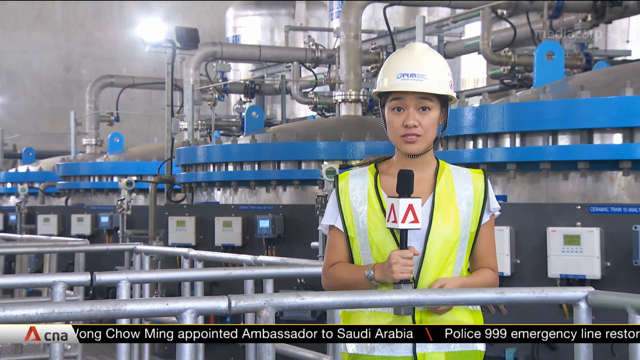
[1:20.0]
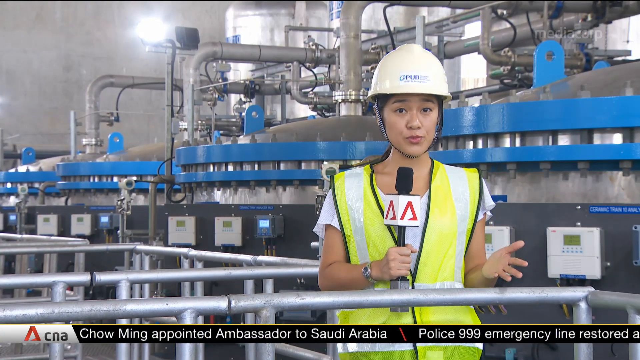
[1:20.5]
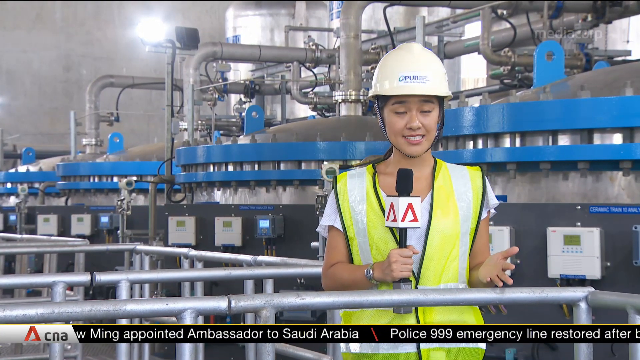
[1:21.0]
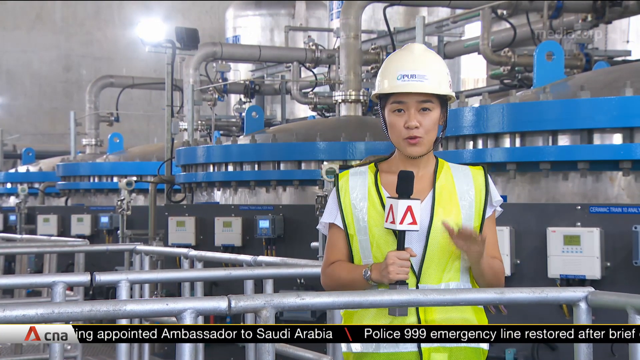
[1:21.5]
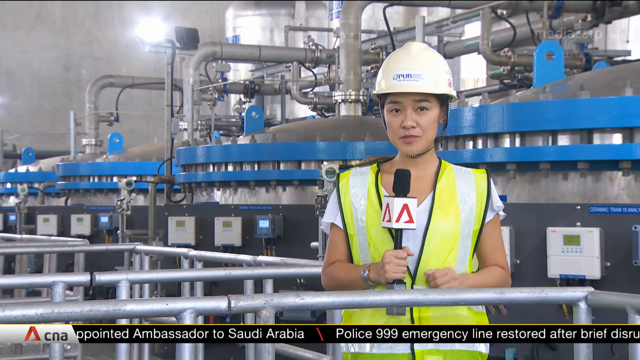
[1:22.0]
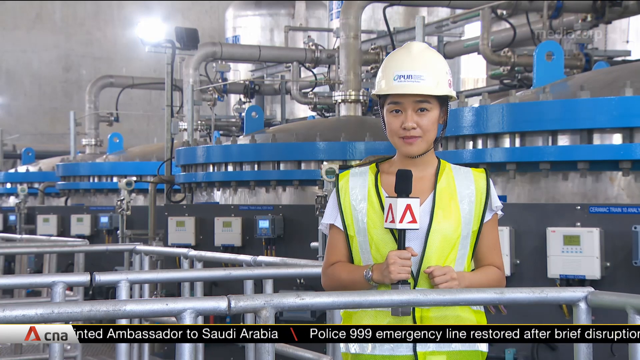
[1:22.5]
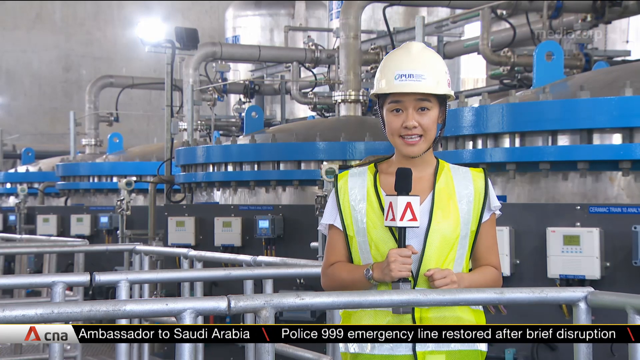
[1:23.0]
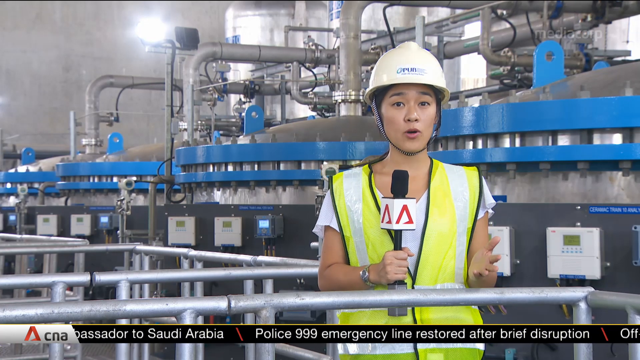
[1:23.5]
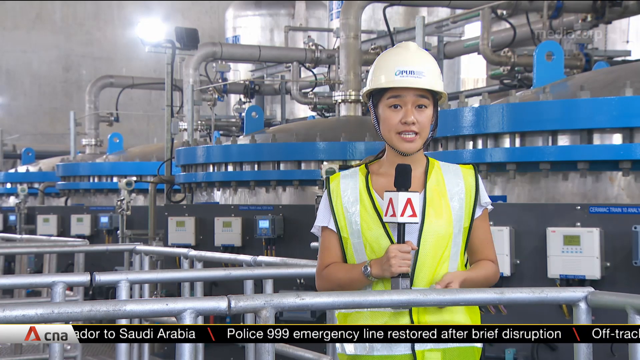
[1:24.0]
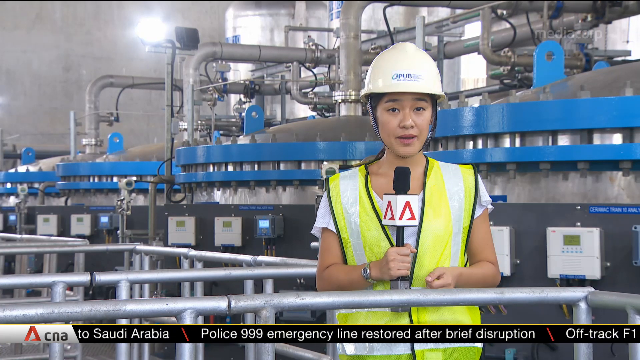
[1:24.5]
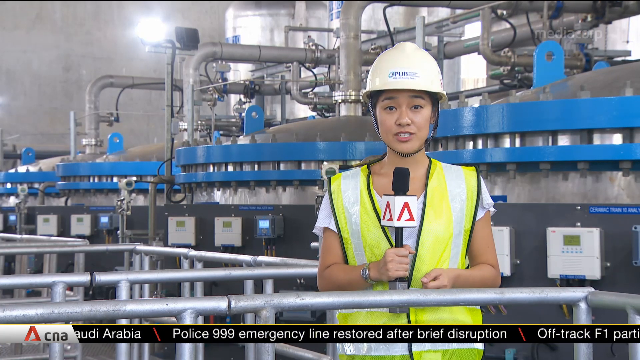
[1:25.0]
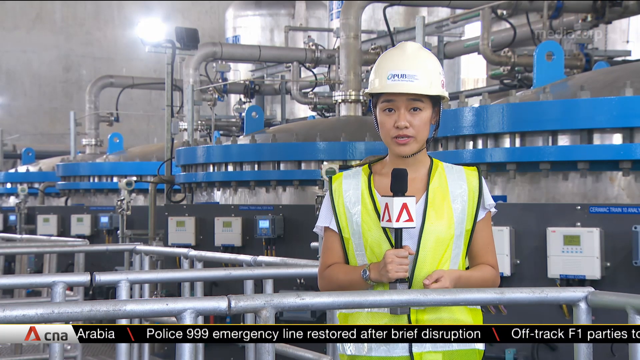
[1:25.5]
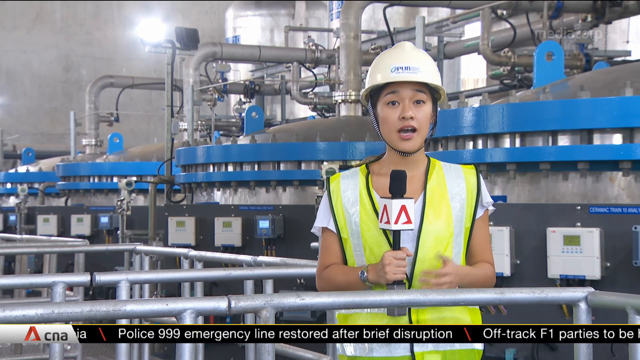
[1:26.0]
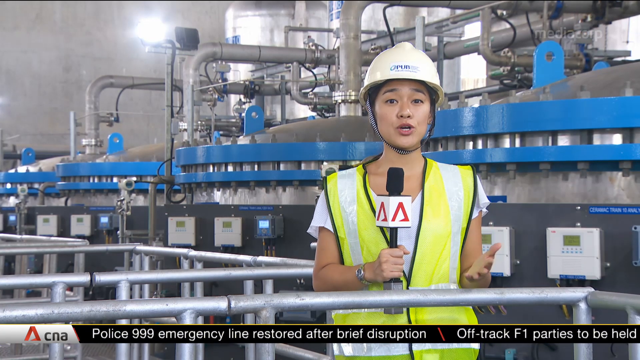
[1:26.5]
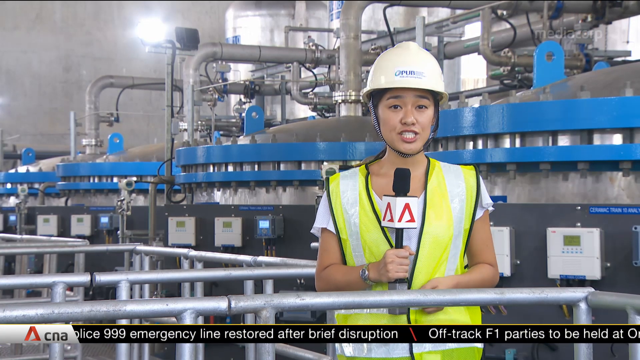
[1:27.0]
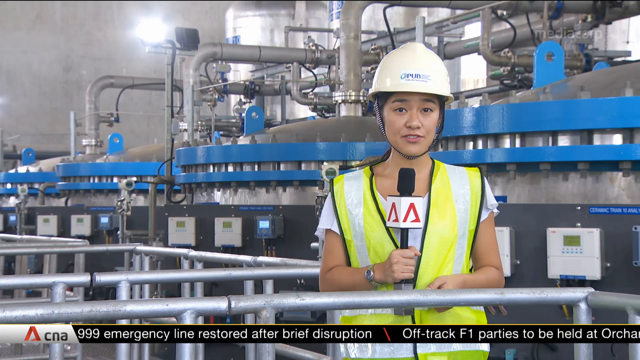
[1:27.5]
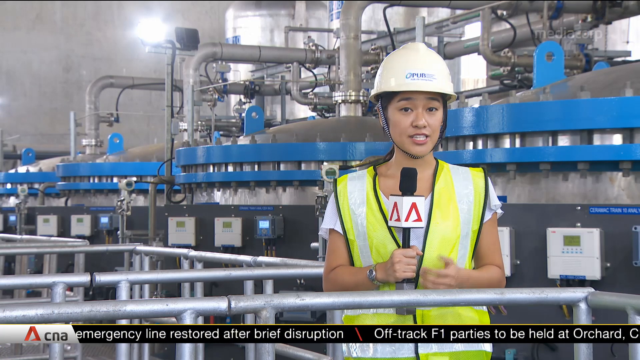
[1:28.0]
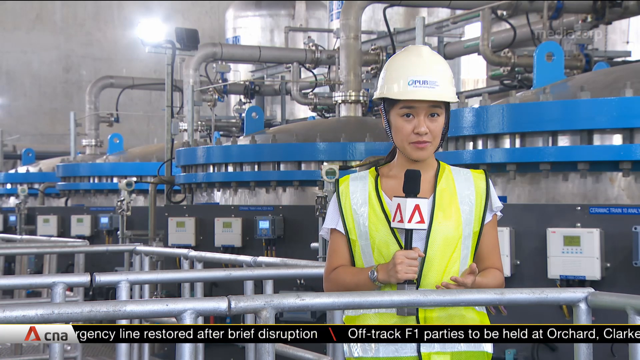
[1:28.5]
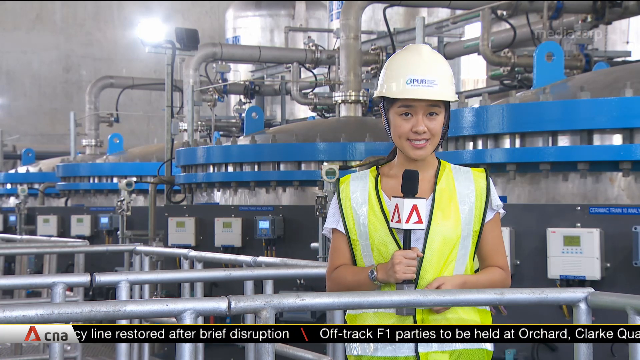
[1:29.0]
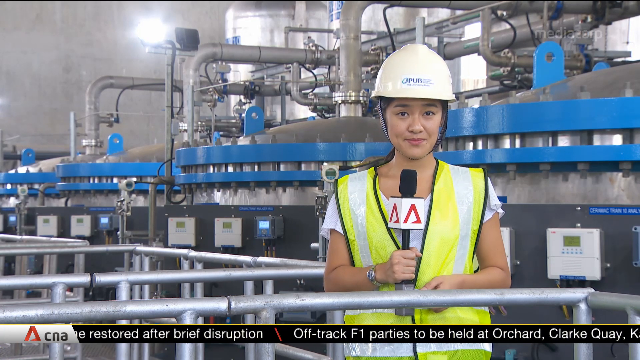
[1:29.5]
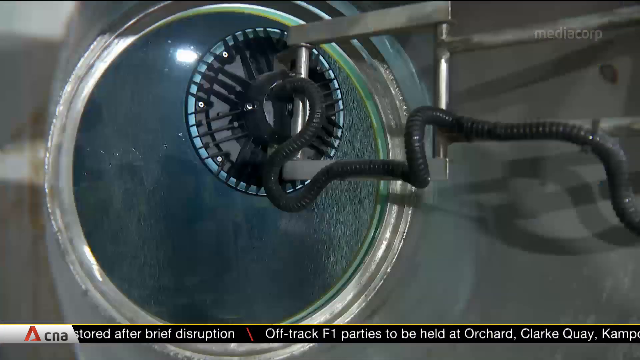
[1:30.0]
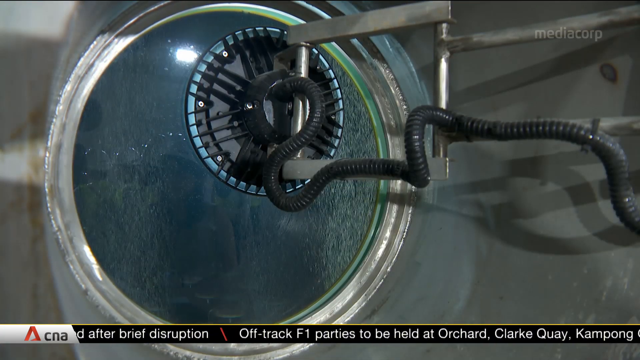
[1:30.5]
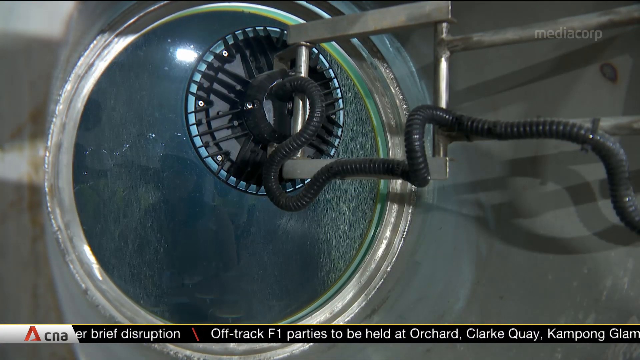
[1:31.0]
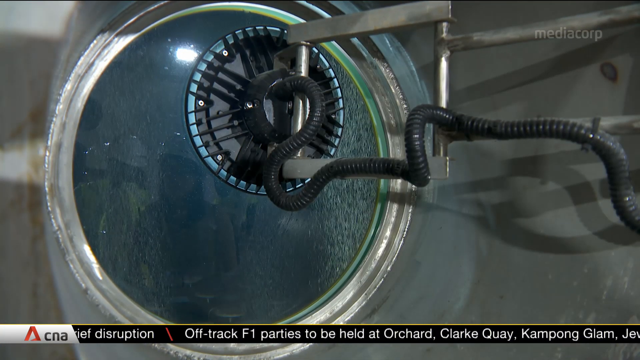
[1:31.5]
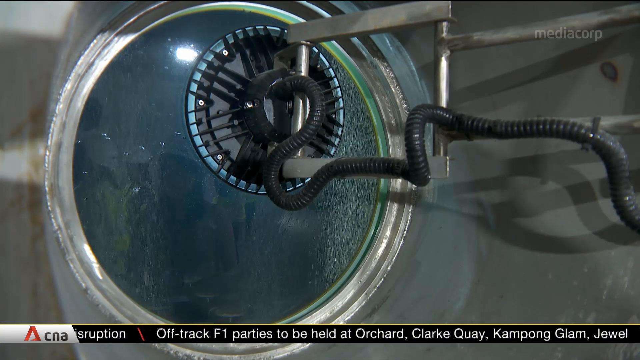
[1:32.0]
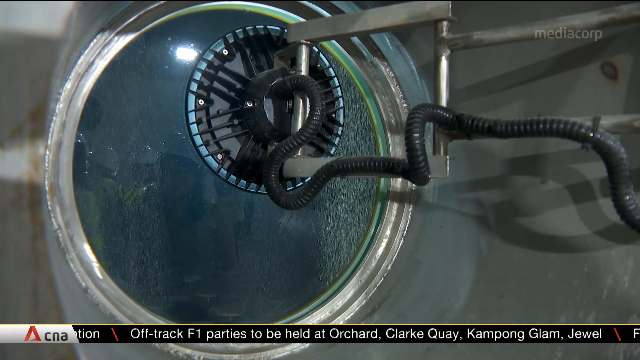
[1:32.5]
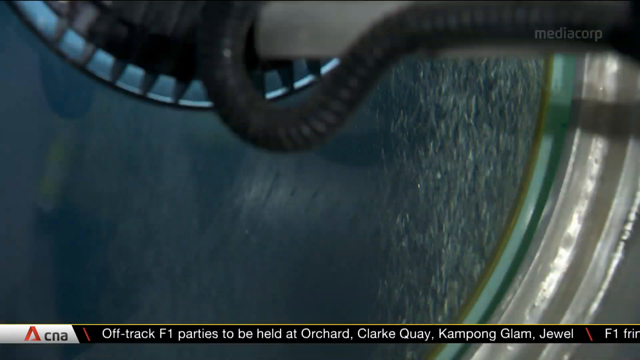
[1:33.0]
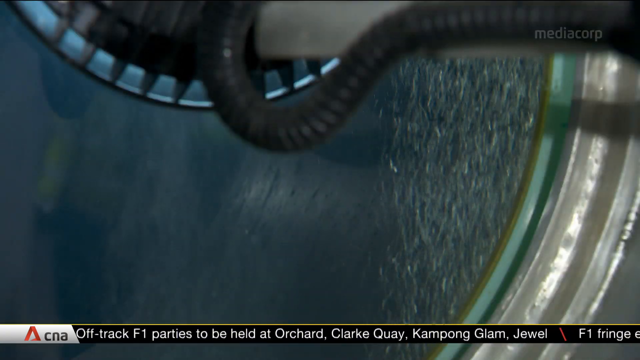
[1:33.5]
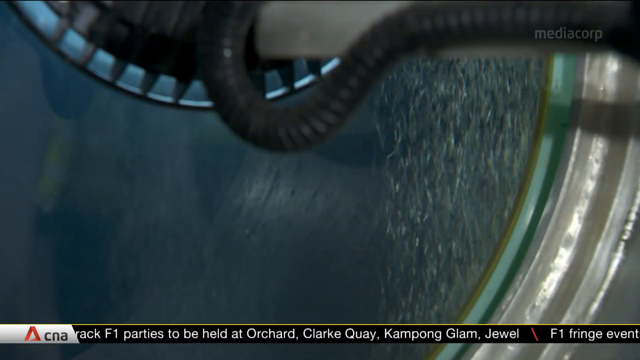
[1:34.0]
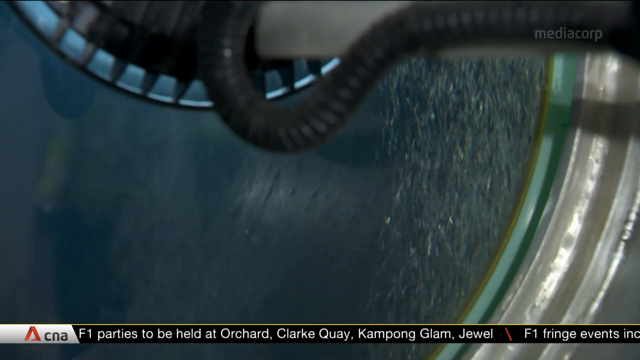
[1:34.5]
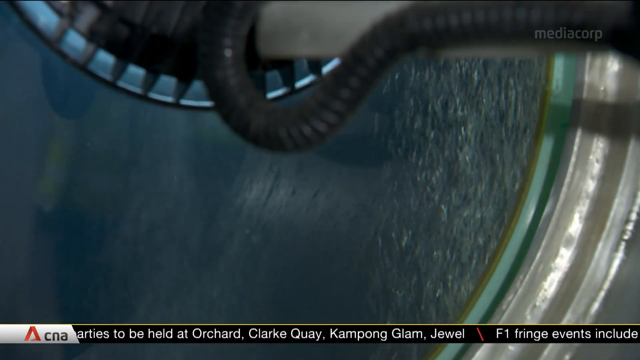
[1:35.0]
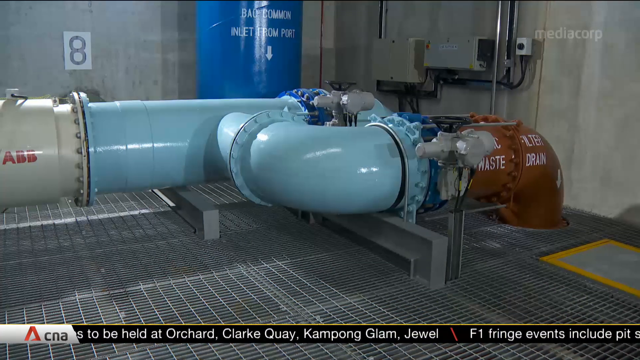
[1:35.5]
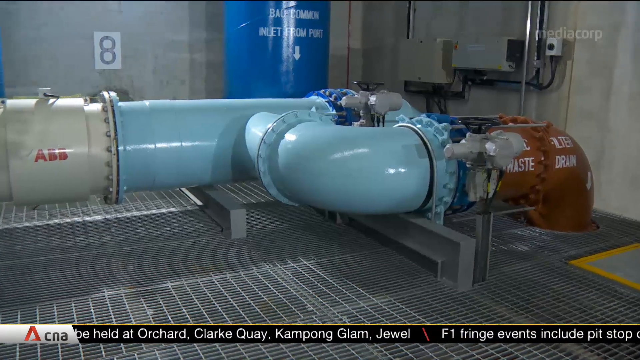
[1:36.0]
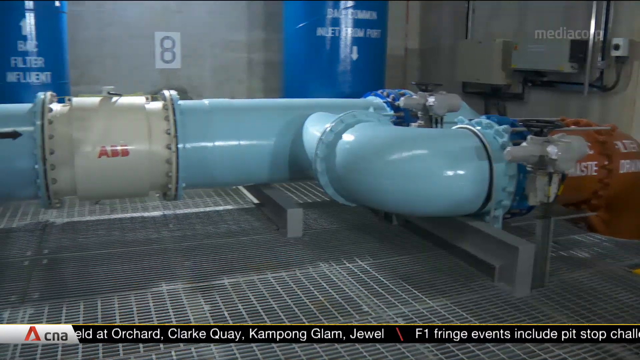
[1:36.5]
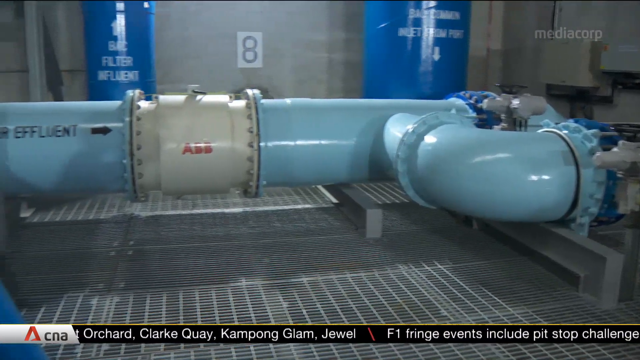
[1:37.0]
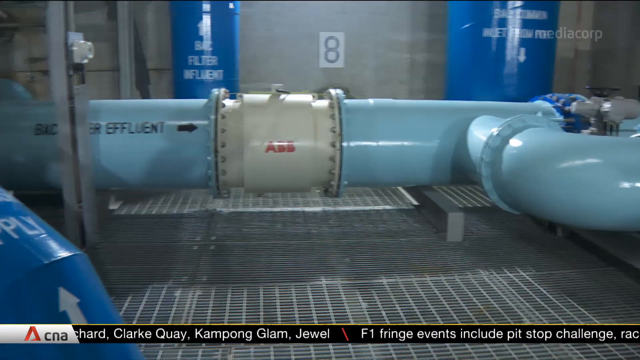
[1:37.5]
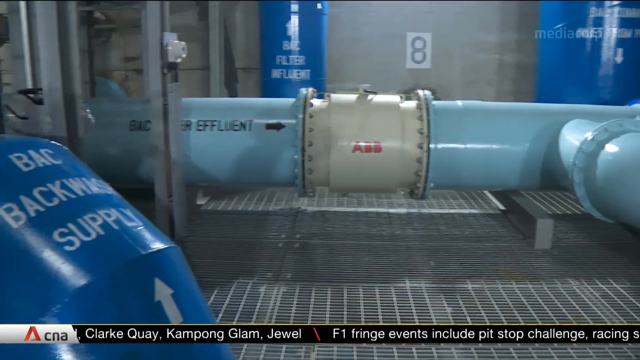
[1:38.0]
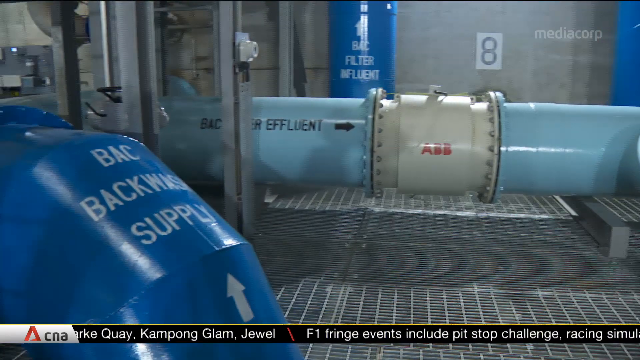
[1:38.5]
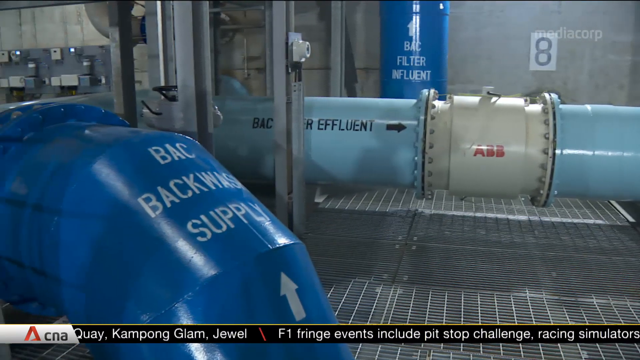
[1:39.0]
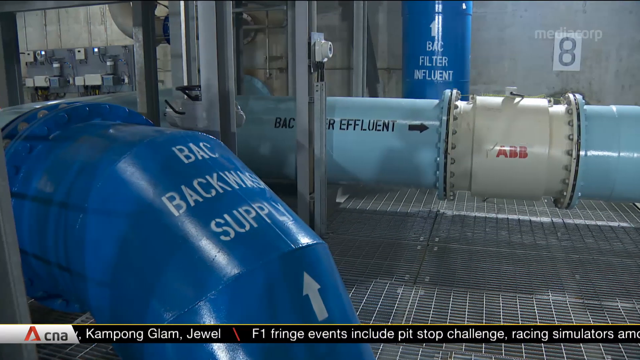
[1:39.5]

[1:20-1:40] At the waterworks, three big tanks with blue lids are in the background, with a series of silver metal pipes coming out of each one and a series of metal handrails all around. In the front right of the screen is Vanessa, the reporter for CNA, wearing a white hard hat, a pale blue shirt and a high-vis jacket over it. She holds a microphone in her right hand, moves her left hand as she talks, and moves her head as well. The video then cuts to more machinery with water flowing through it, followed by a close-up of a pale blue pipe that comes up and joins onto a shorter cream-coloured pipe, which then goes onto another pale blue pipe. Some big dark blue pipes are also visible, along with a grated metal floor and other parts of the factory, including some see-through doors.